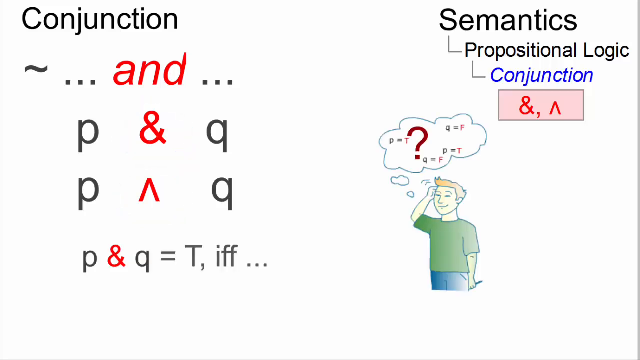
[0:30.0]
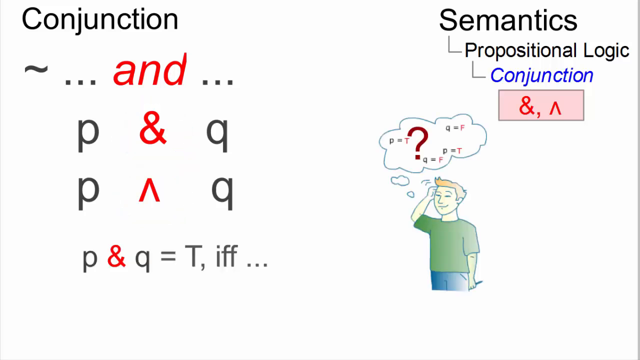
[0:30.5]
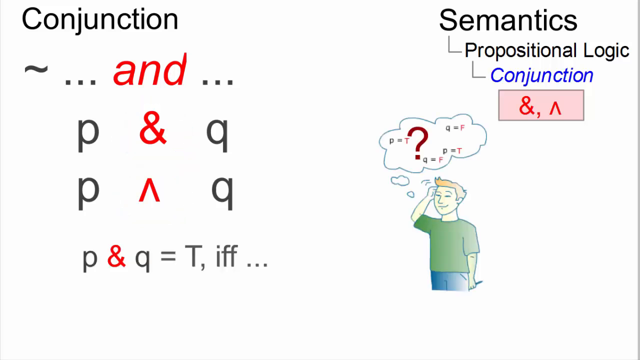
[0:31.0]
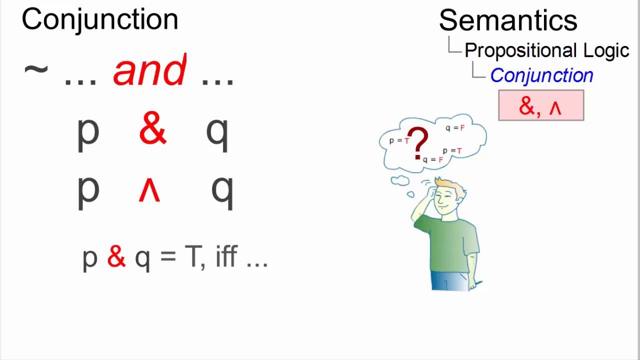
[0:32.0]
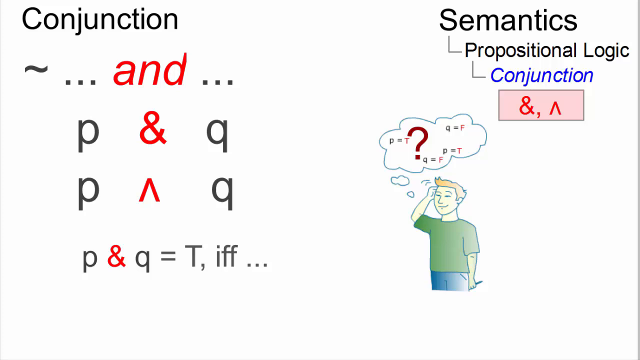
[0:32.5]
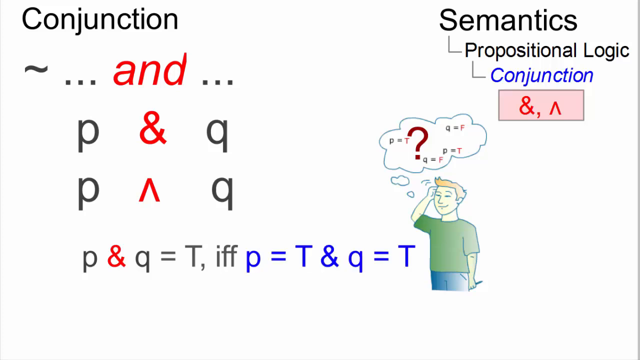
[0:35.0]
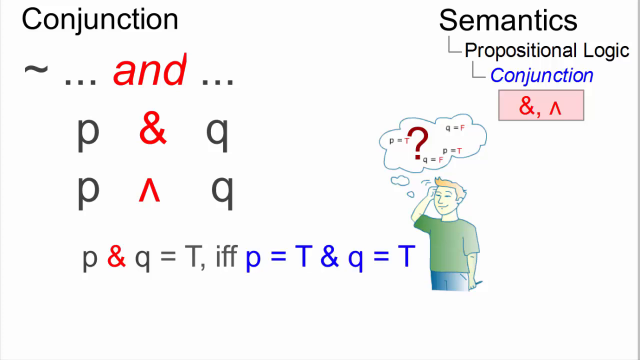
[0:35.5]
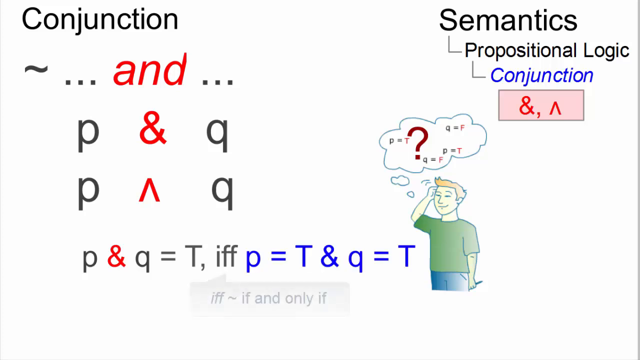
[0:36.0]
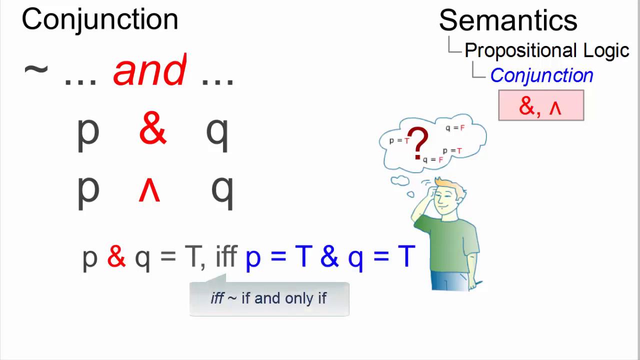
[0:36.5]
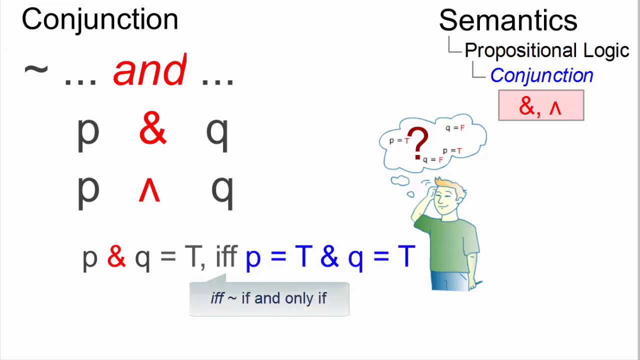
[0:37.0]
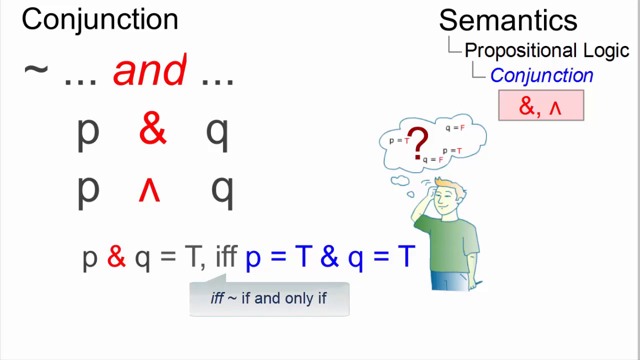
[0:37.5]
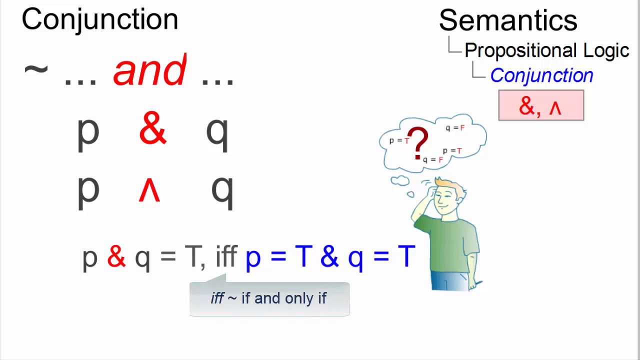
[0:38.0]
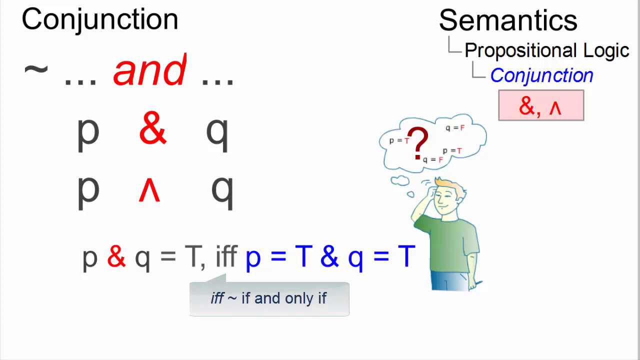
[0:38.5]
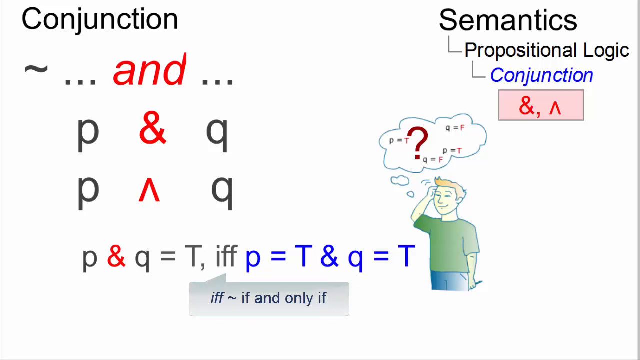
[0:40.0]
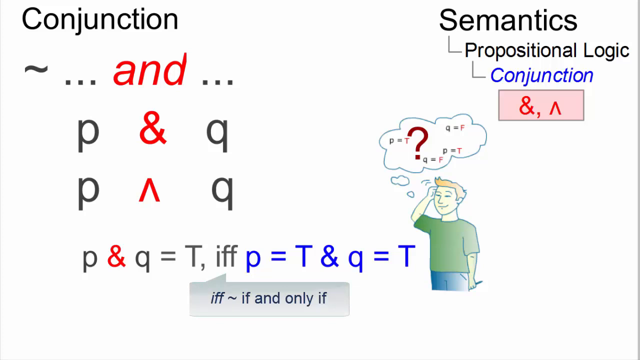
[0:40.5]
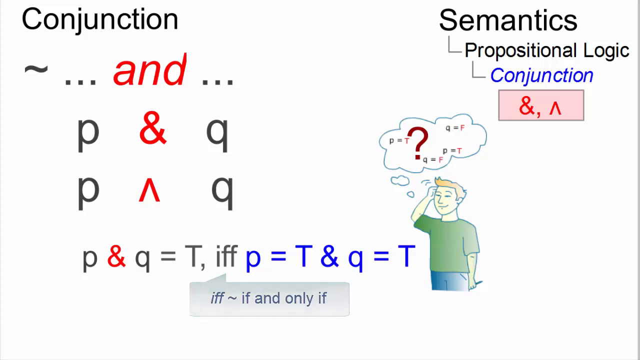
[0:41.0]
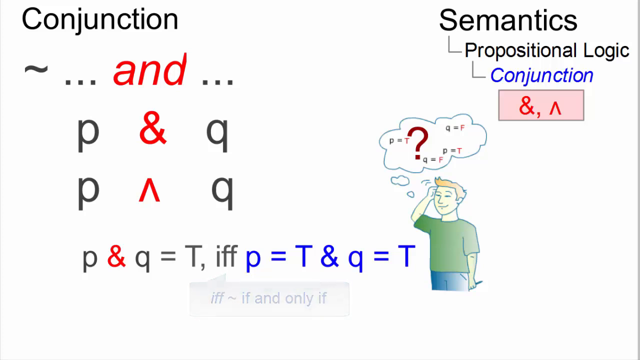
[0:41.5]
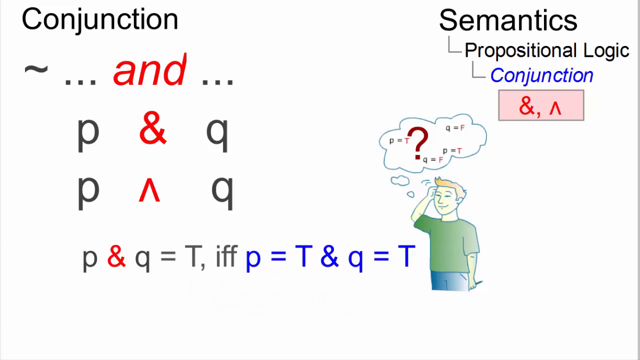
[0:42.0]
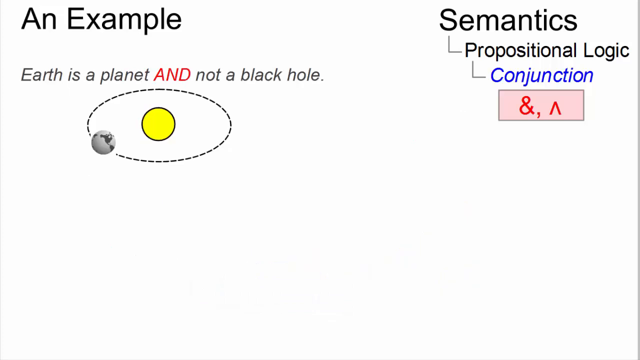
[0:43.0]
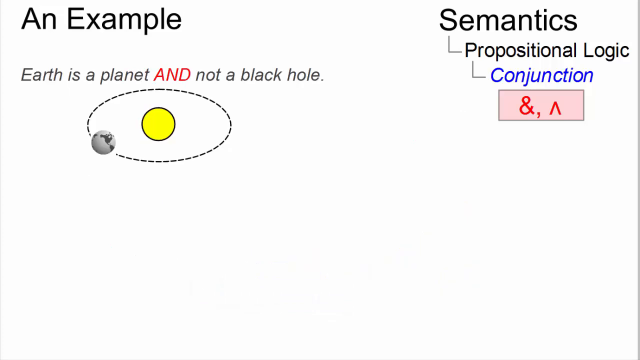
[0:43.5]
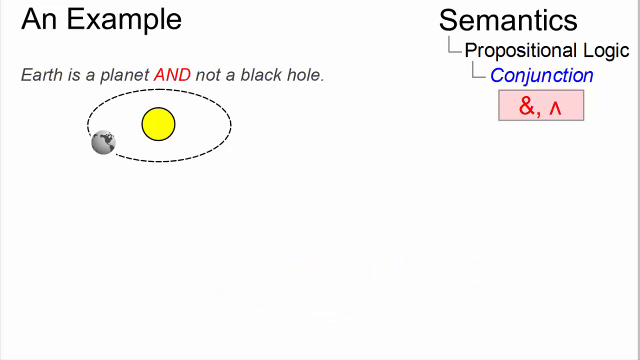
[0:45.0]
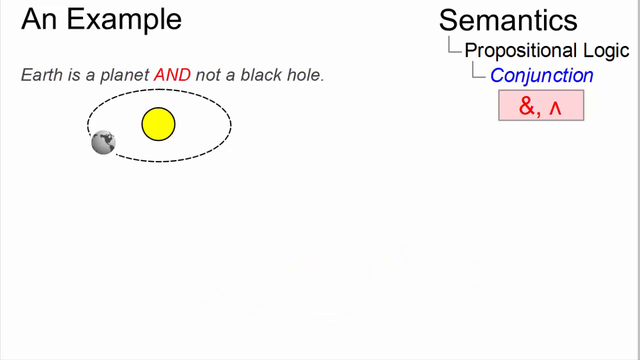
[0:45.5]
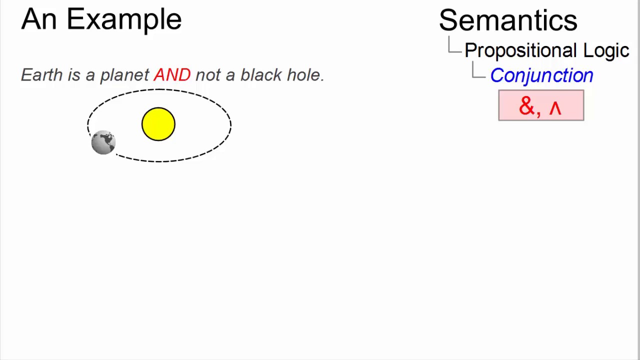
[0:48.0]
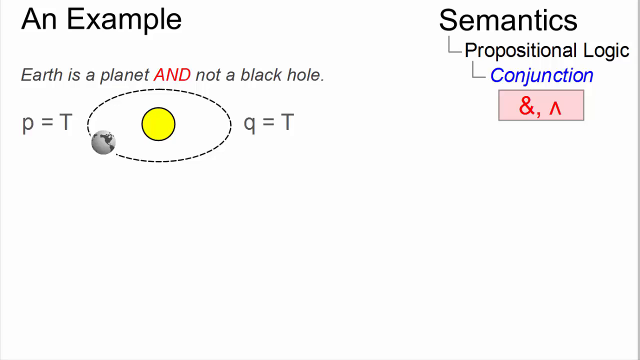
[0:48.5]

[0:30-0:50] The page has "conjunction" in the top left corner, with the word "and" in red between three dots on each side. Below is the equation P, a red and symbol, Q, then p, a red upside-down V, and q. At the bottom is "P and Q = T, IFF" followed by three dots. The upper right corner reads semantics of propositional logic, conjunction. On the line P and Q = T IFF, the following "P = T" and "Q = T" are in blue, and IFF is explained as "if and only if". The character scratches his head, with the cloud bubble above it. An example reads "Earth is a planet and not a black hole". A yellow circle is surrounded, about an eighth of an inch out, by a black dotted line, with a small white ball with some dark areas on it between the lines. "P = T" is on the left side of this and "Q = T" on the right.